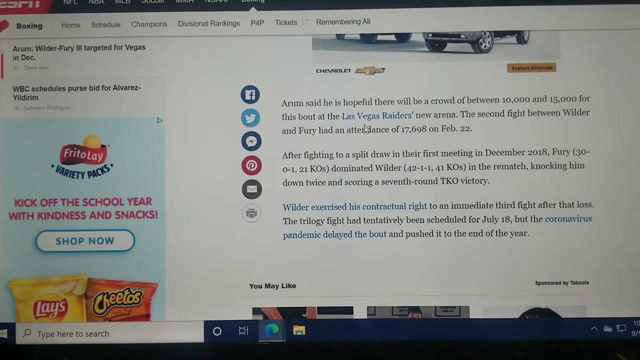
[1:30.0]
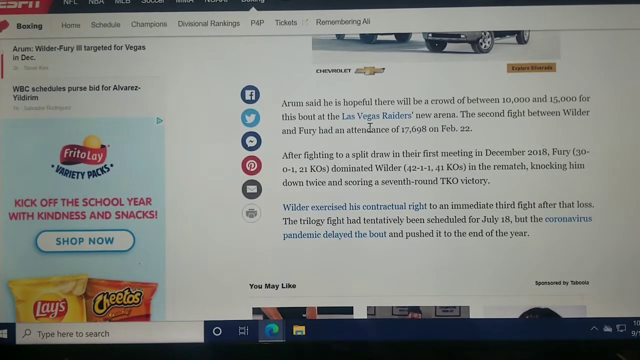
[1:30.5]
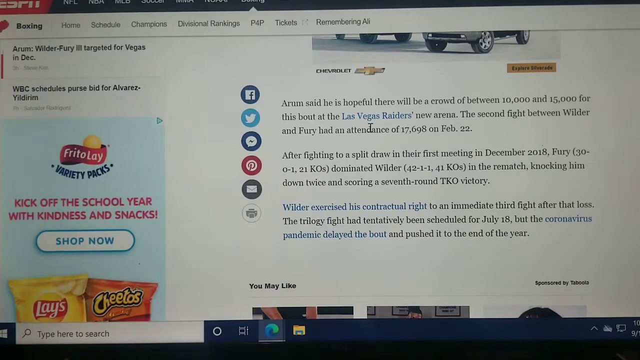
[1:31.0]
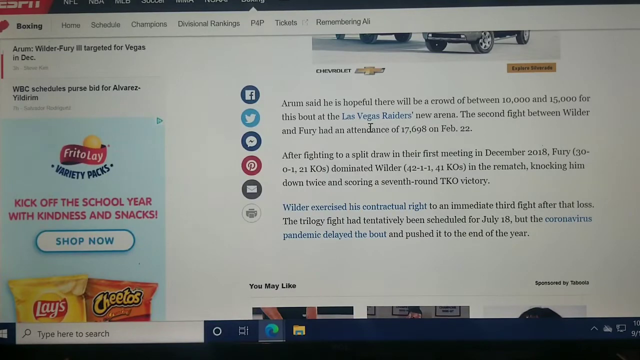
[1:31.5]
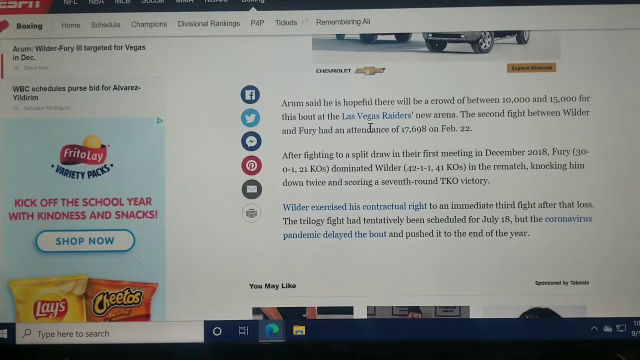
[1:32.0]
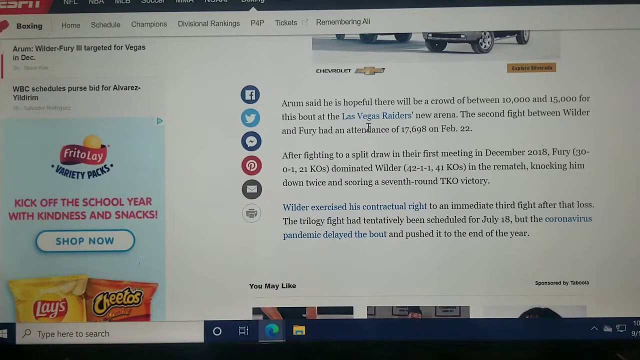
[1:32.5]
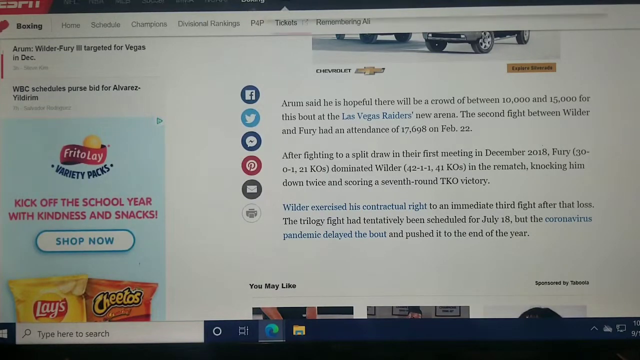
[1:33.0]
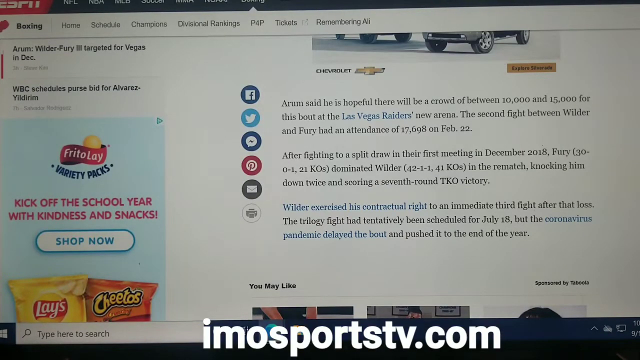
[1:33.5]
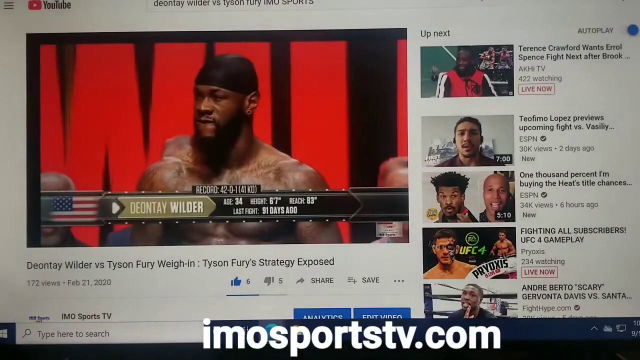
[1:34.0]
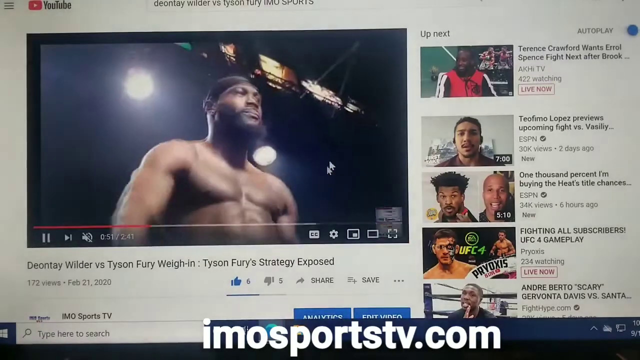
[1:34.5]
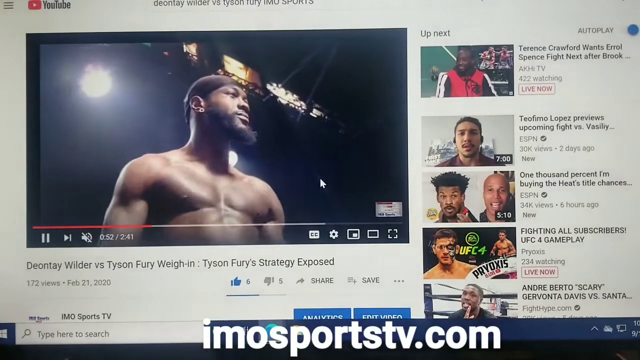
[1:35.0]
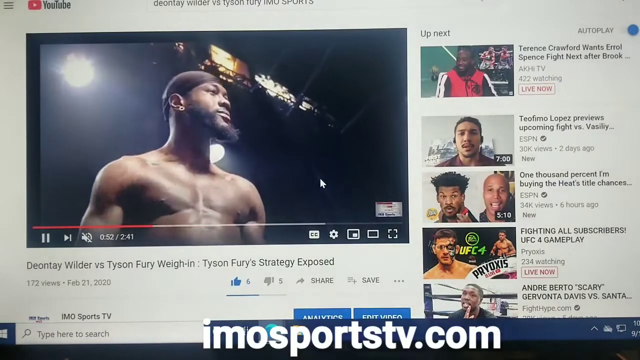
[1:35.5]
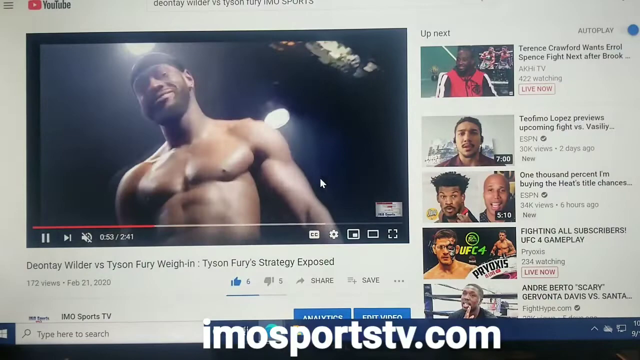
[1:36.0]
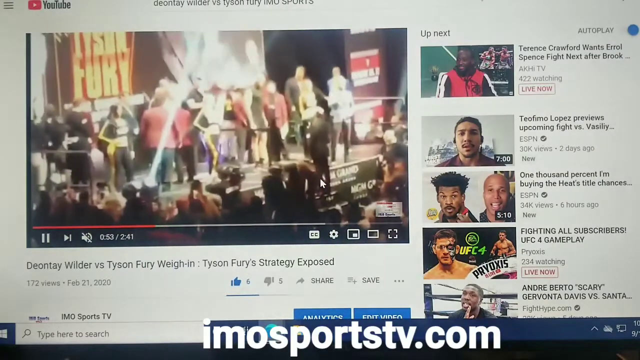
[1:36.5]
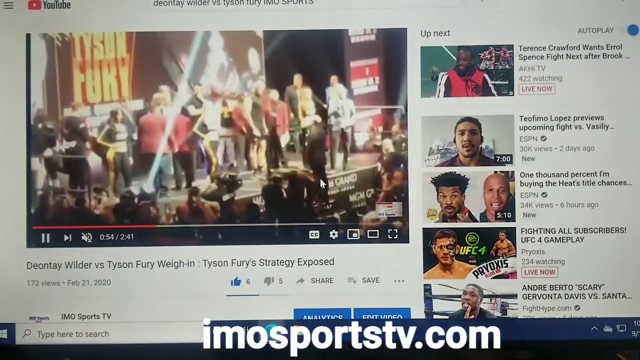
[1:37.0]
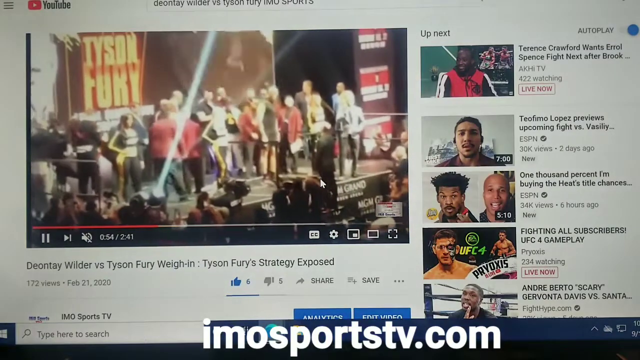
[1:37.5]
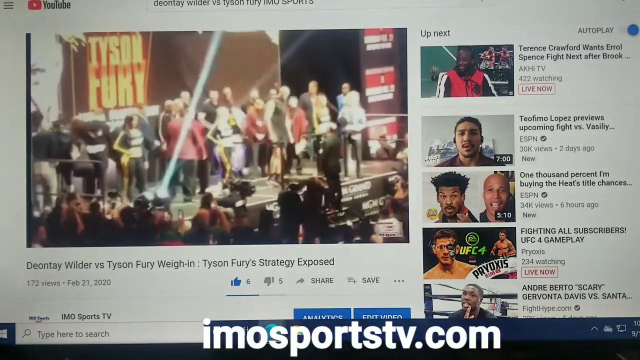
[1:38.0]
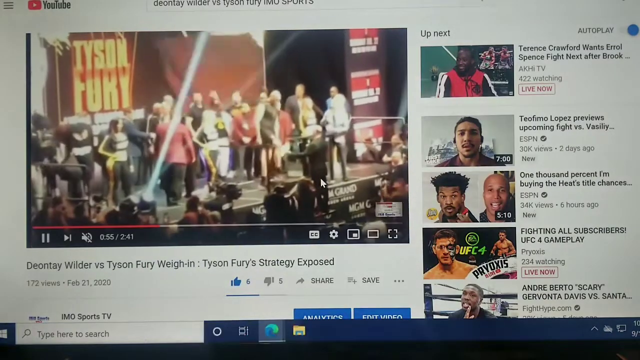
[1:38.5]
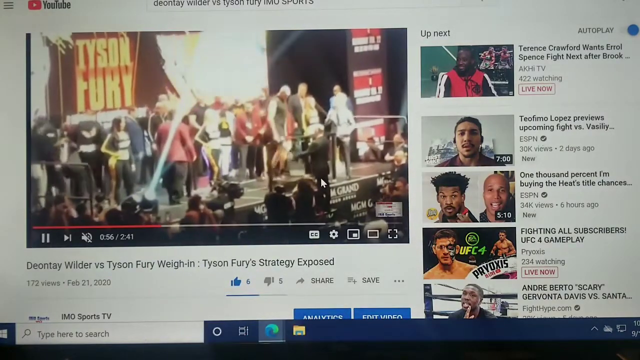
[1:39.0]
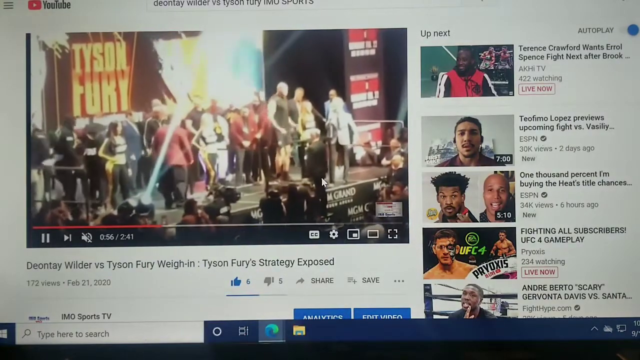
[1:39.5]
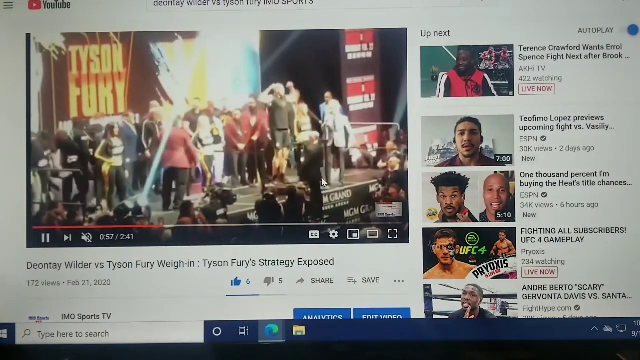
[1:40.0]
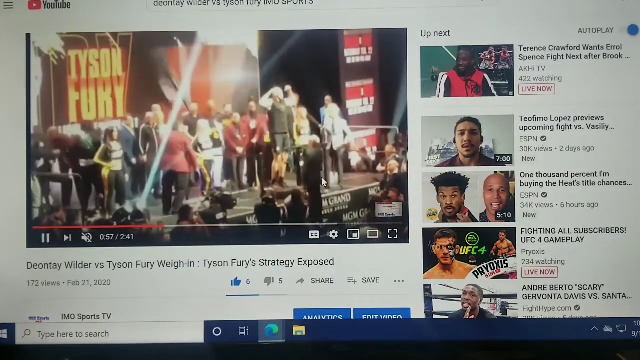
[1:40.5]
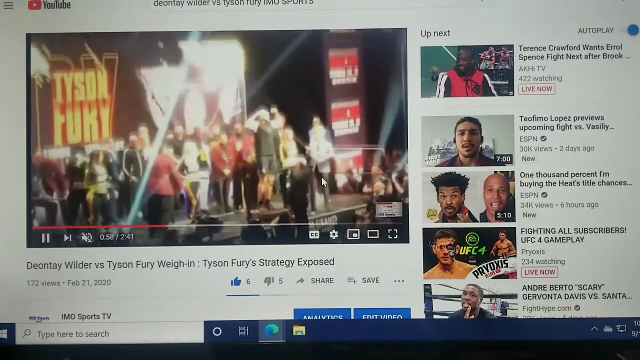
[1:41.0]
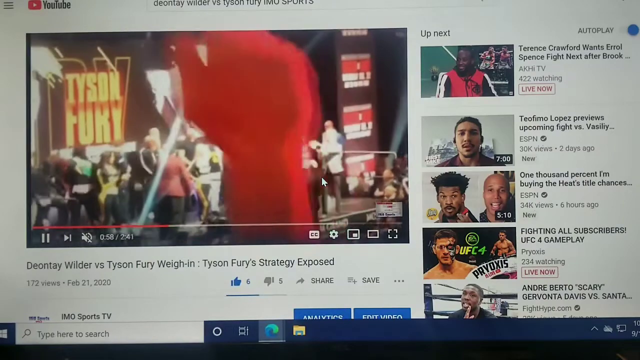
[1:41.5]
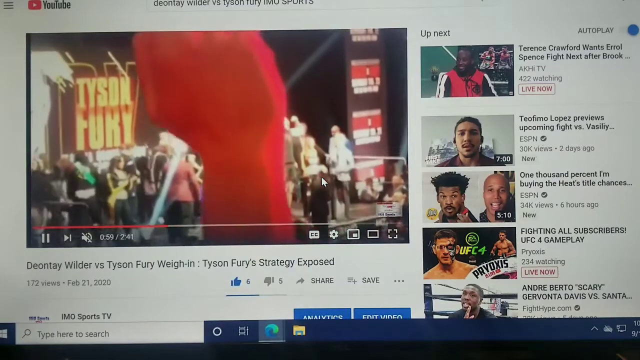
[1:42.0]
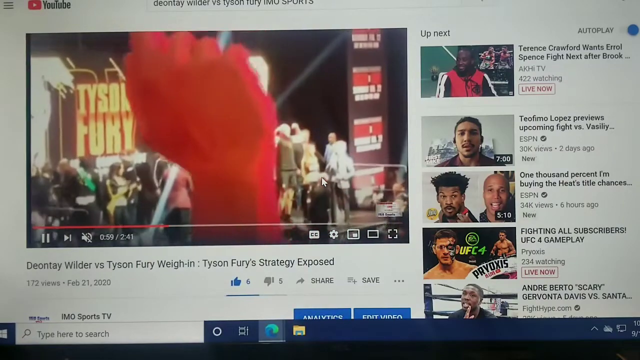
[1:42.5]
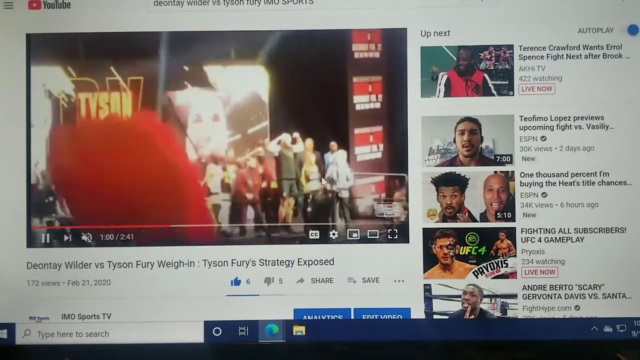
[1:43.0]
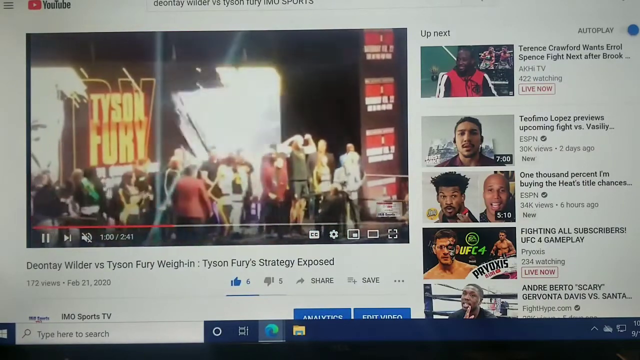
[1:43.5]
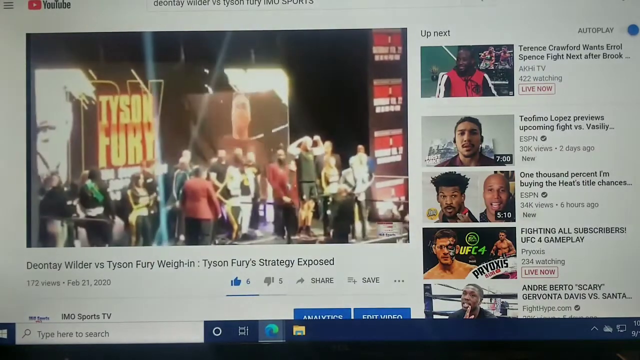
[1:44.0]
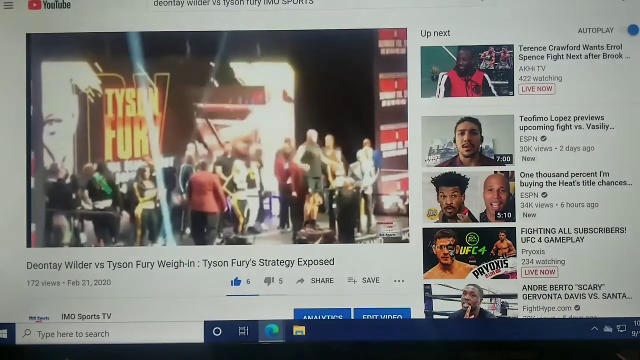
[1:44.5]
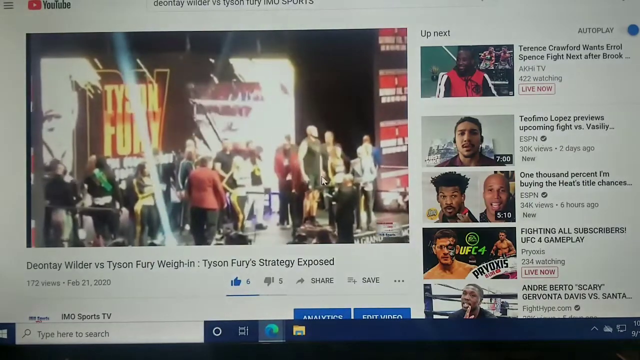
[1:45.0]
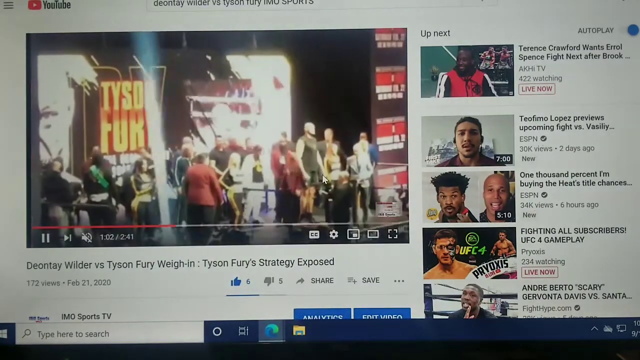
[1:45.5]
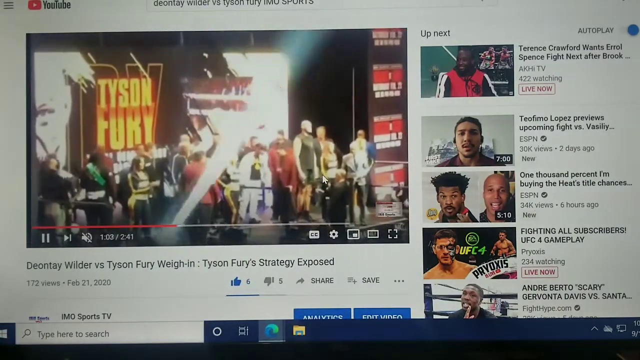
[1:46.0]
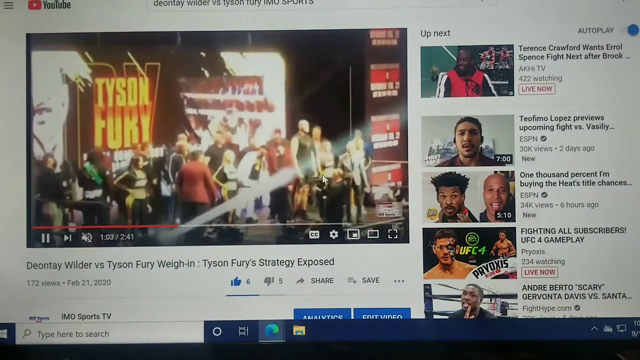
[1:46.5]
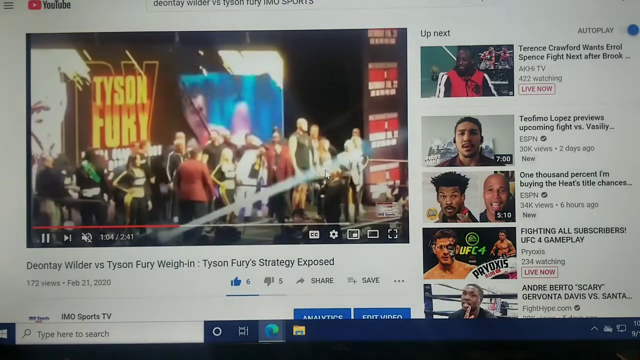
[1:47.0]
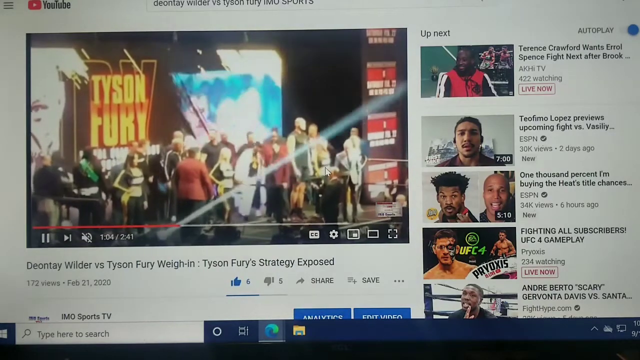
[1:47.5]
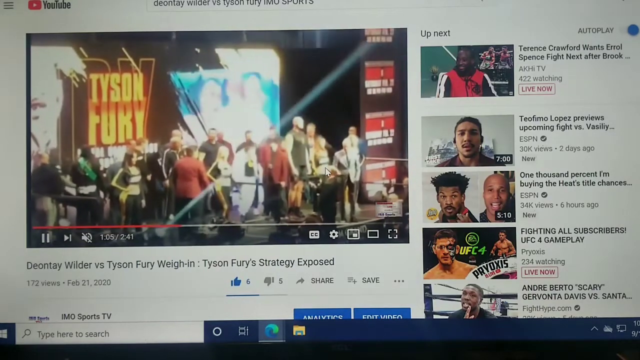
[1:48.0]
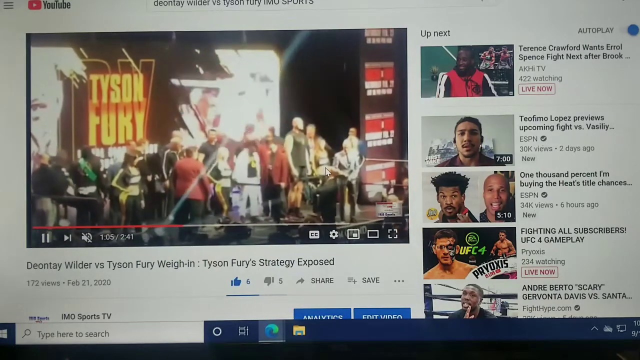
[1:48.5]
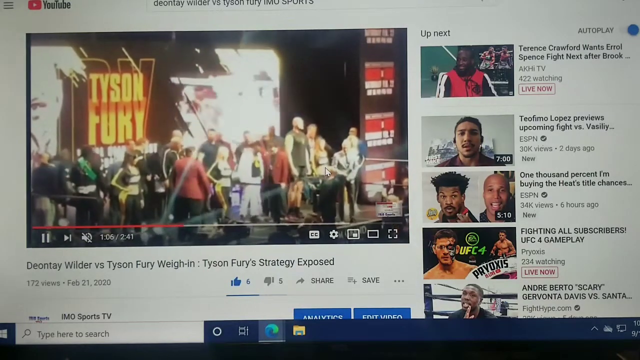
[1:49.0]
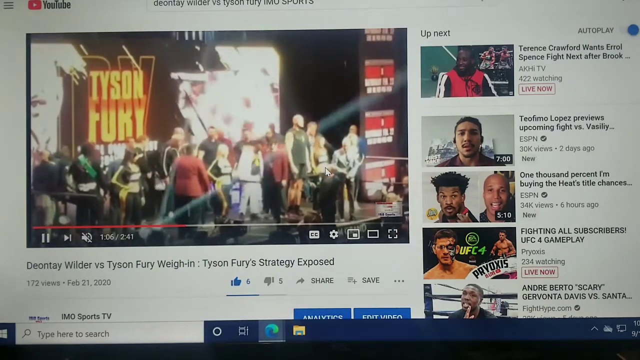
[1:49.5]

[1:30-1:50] Someone is filming themselves on a computer, looking at some type of news article on a web page. The mouse flashes across the screen and the person changes from the news site to YouTube, where a video about a Deontay Wilder versus Tyson Fury weigh in is playing. The video shows a bunch of people in some kind of arena, with a ton of people everywhere and lots of people on stage. Tyson Fury flexes his muscles from a distance, with everyone on the stage with him. At one point a hand comes across the camera in the YouTube video, blocking the stage a little for a few seconds. Tyson Fury is clearly saying something. The whole time this plays, the mouse stays stationary.